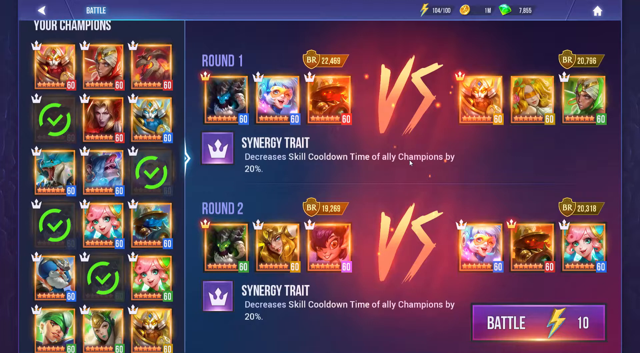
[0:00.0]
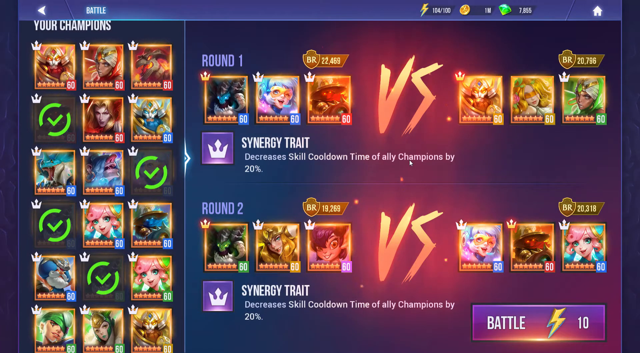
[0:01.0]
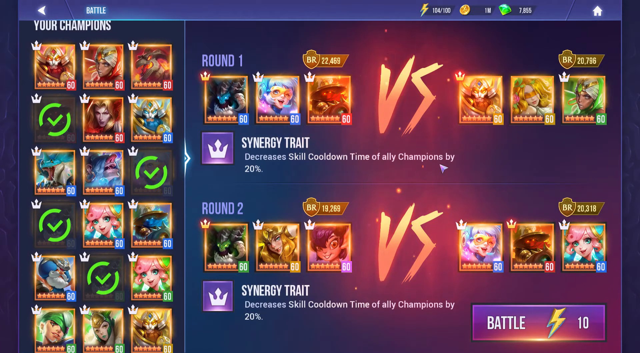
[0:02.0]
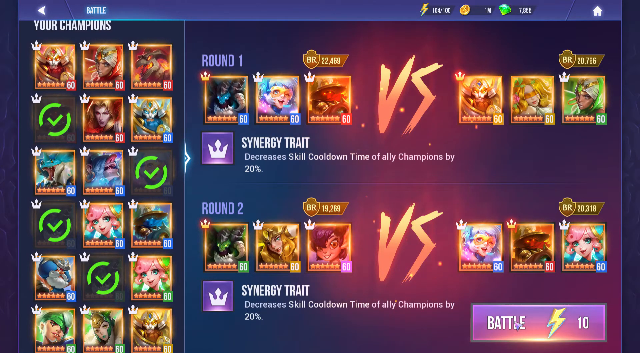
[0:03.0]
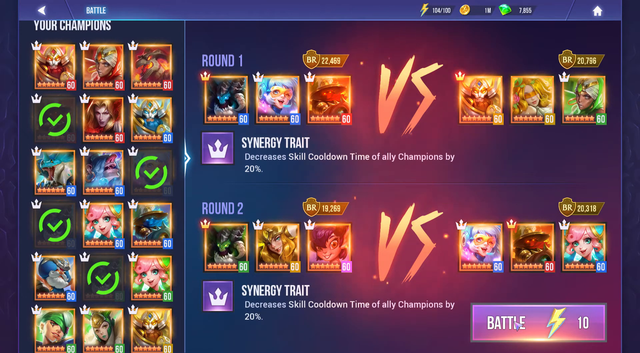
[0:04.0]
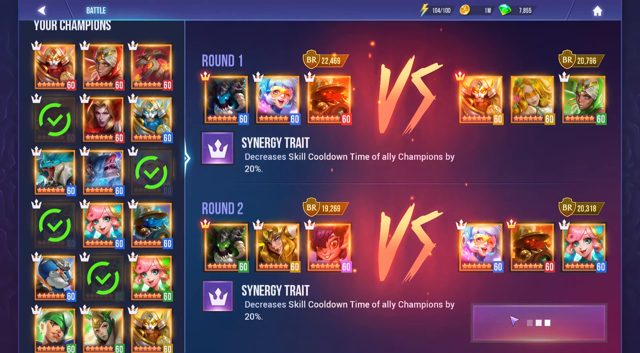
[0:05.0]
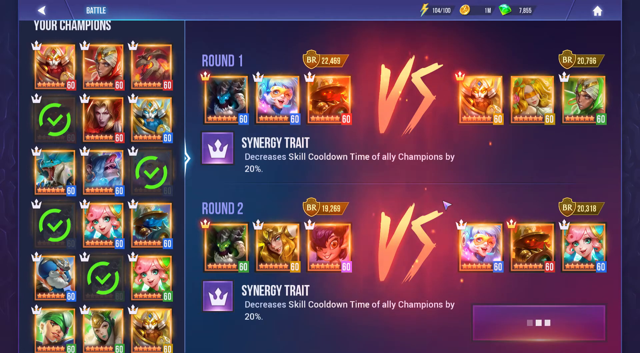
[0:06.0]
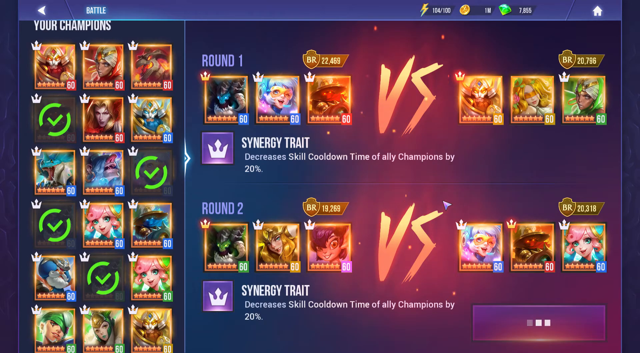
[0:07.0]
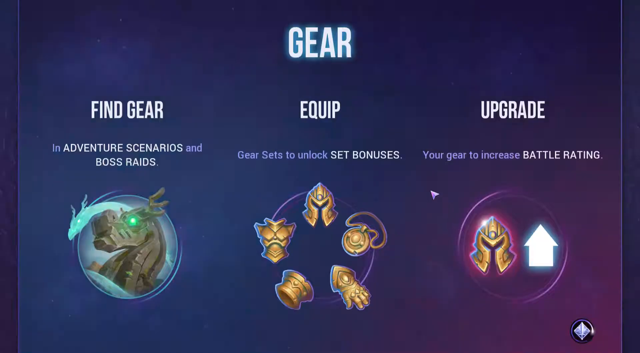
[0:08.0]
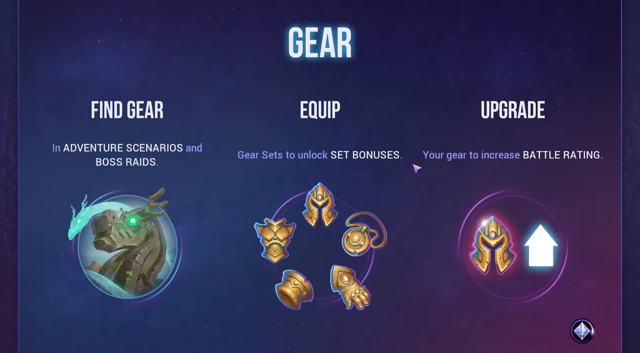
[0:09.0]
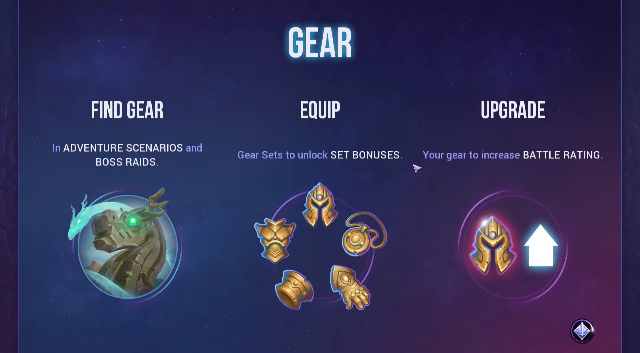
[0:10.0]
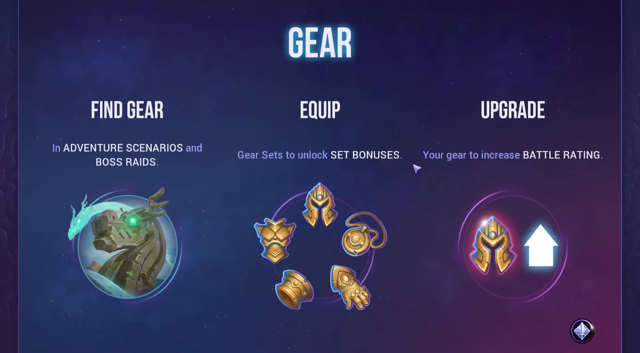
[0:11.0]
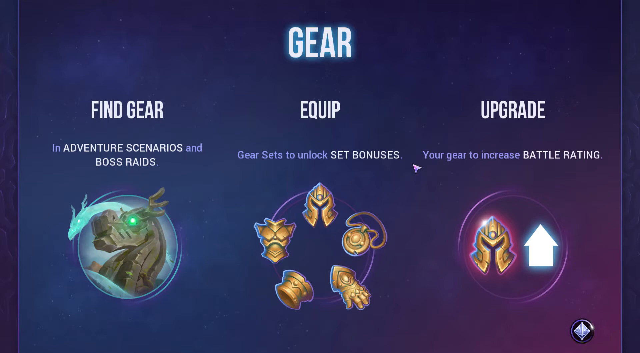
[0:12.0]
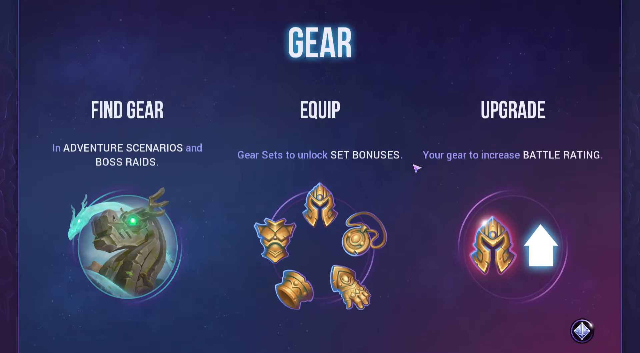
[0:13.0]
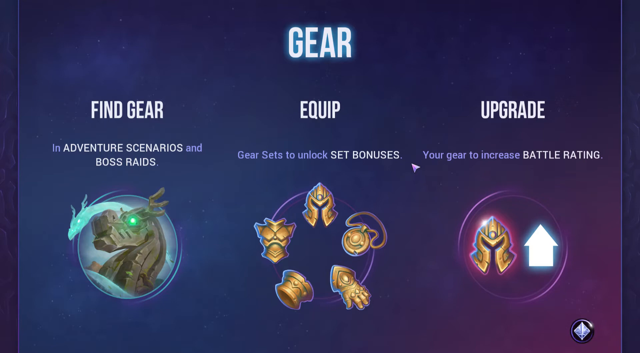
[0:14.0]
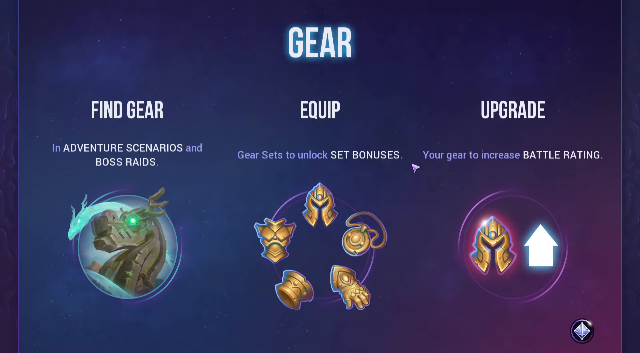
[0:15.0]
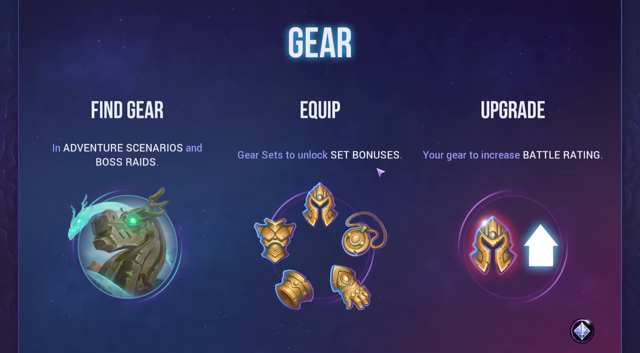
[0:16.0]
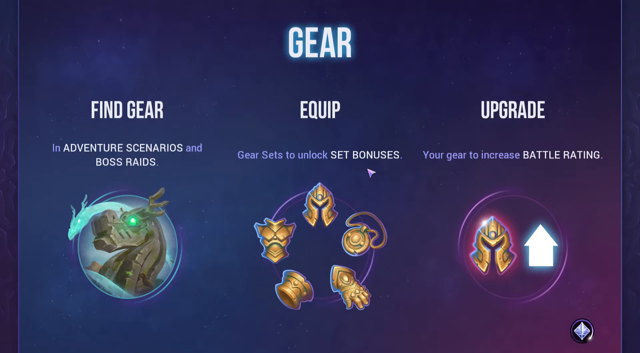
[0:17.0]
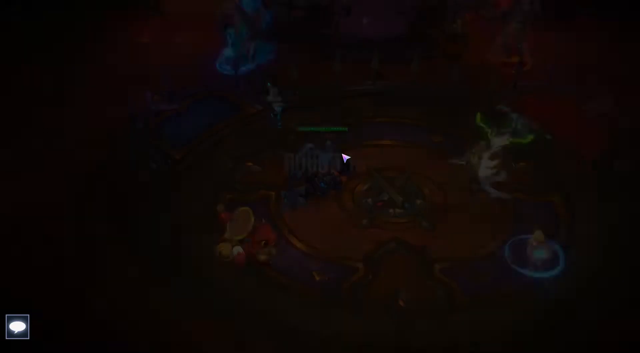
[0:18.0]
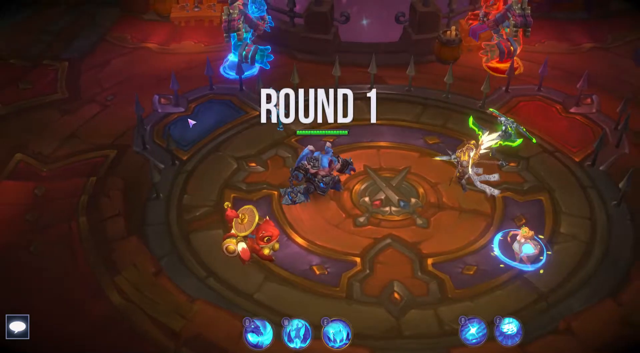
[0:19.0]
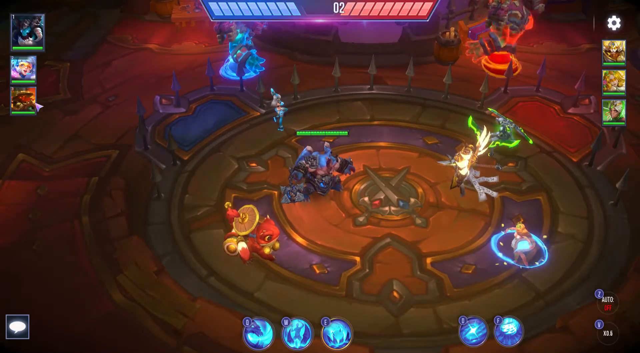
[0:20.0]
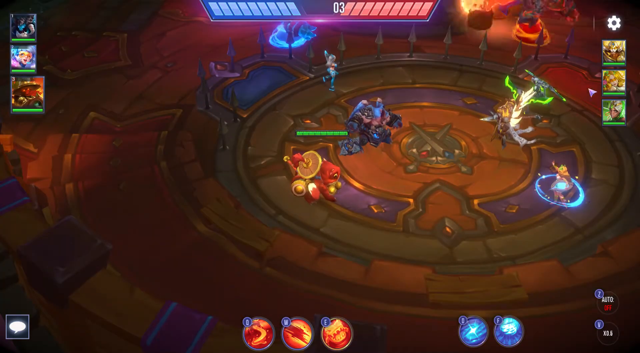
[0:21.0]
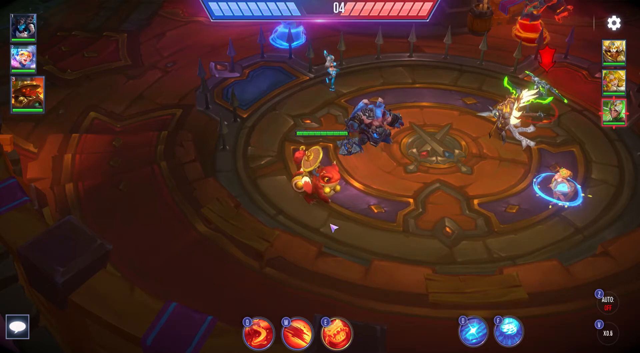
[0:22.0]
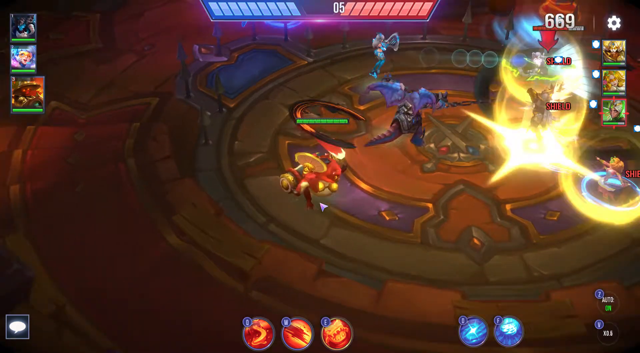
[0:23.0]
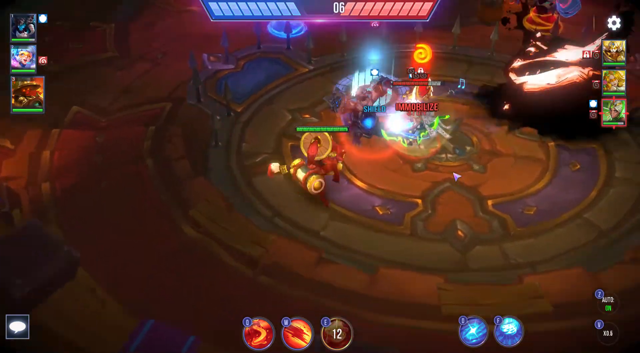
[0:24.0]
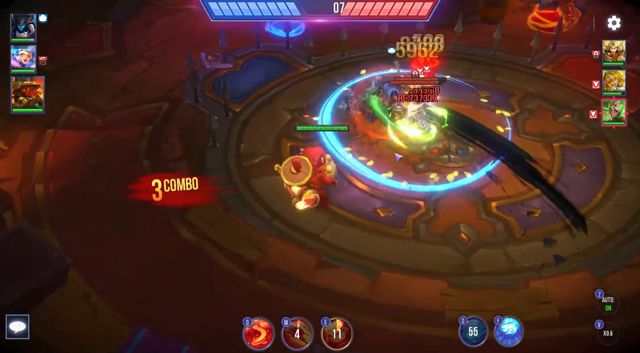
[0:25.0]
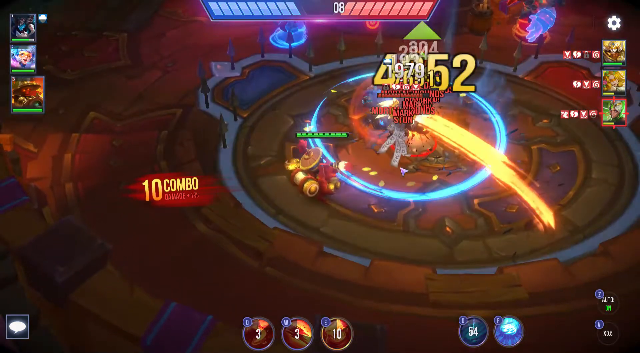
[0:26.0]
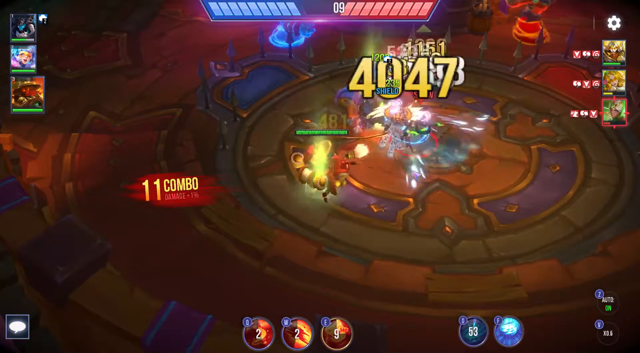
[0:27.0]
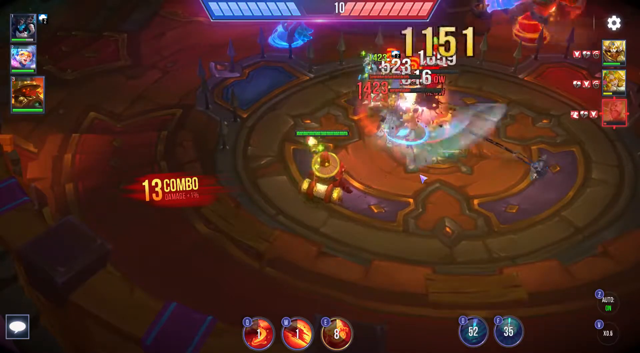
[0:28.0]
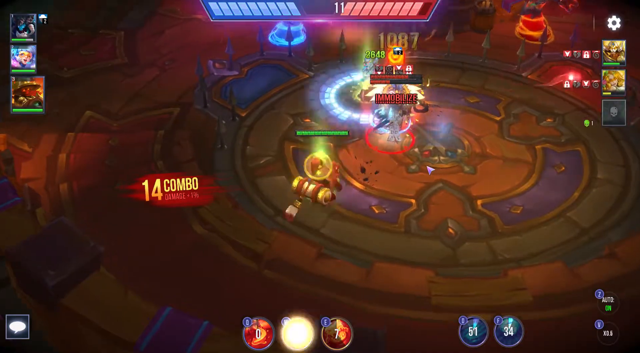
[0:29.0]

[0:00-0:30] The video appears to be clips from a video game streaming session. It opens on what looks like a starting page showing some of the avatars; the game seems to be between at least two different teams. The page gives results for round one and round two and shows three avatars versus three other avatars, possibly three individuals or teams playing each other over three rounds. This page stays up for a few seconds. The video then moves to a gear screen, with one section that apparently gives information on how to find gear, "equip" in the middle, and then "upgrade" with more information. This screen stays up for a while. The video then goes into the game itself, where an anime-looking character plays for a few seconds.